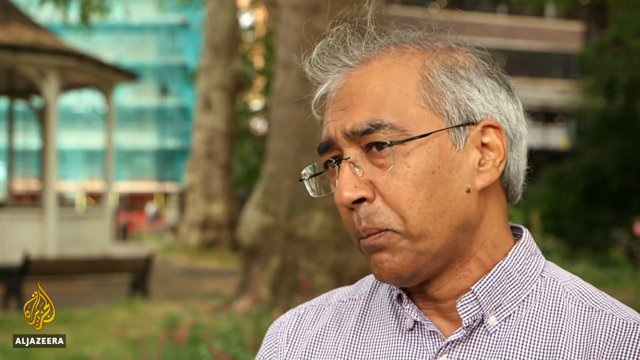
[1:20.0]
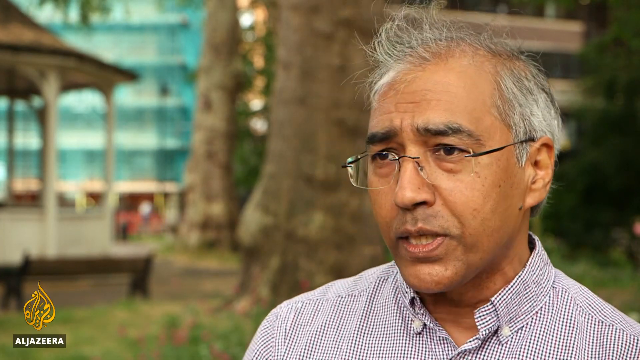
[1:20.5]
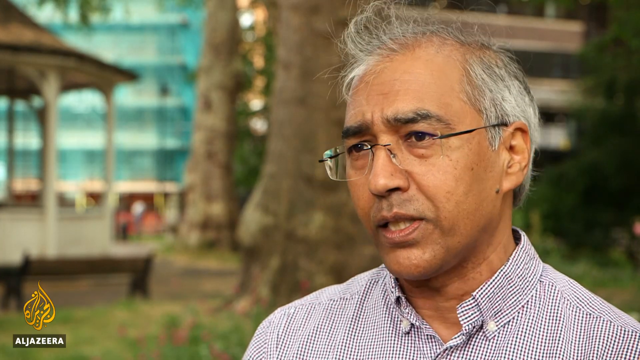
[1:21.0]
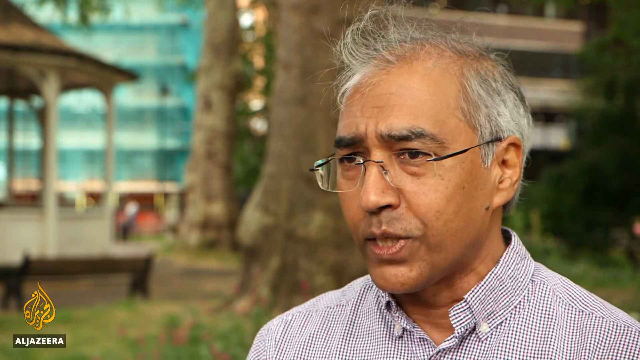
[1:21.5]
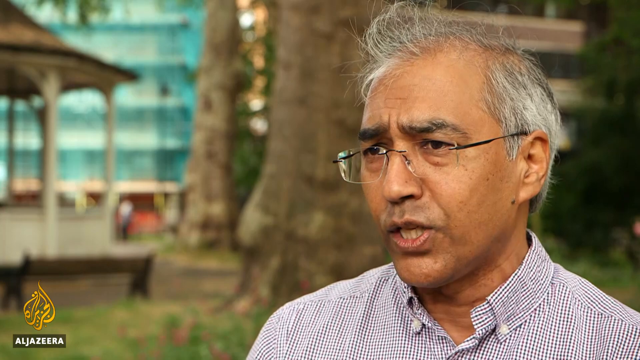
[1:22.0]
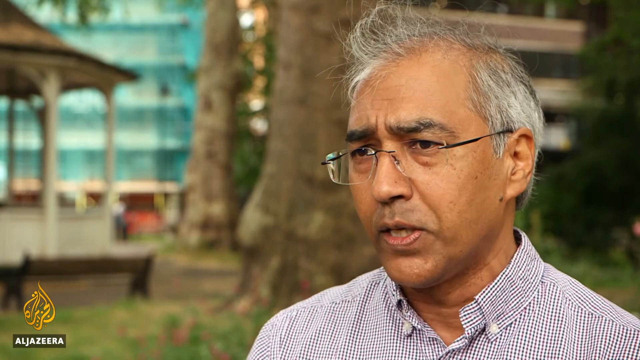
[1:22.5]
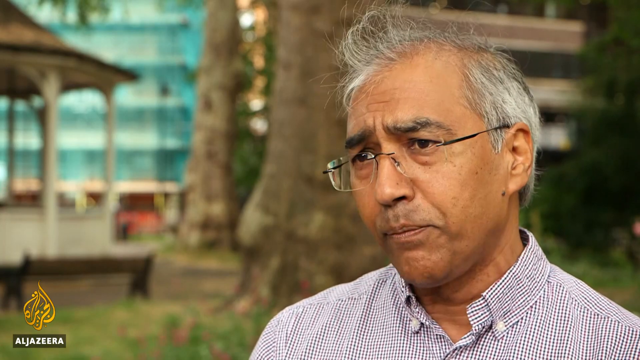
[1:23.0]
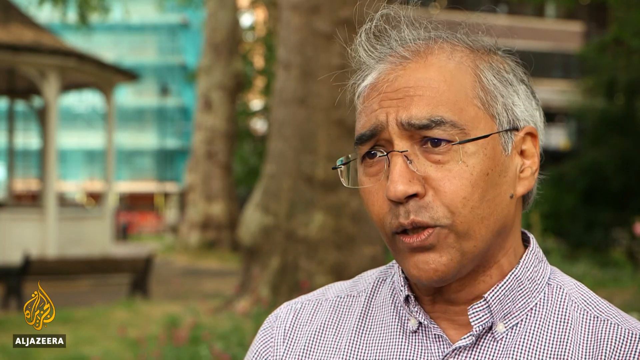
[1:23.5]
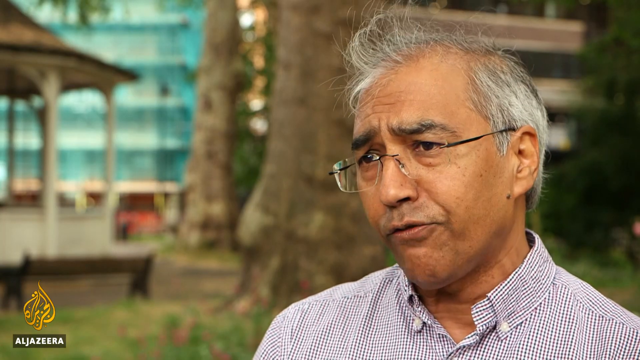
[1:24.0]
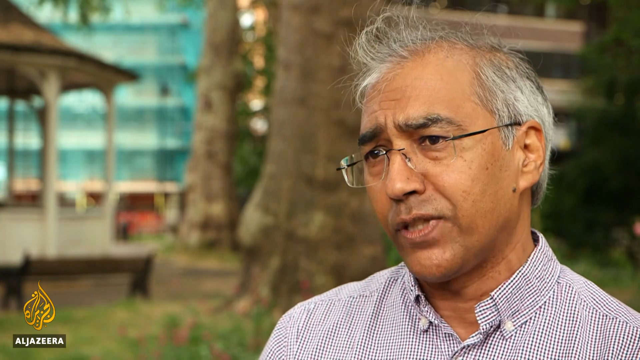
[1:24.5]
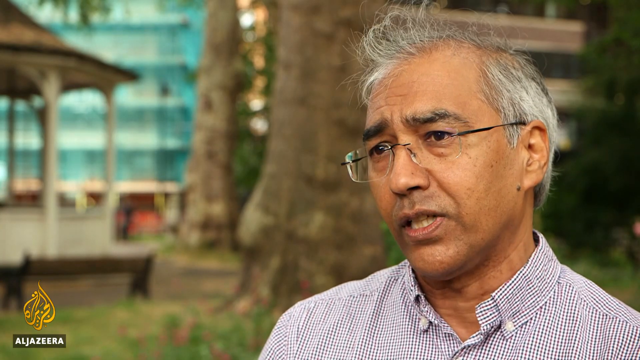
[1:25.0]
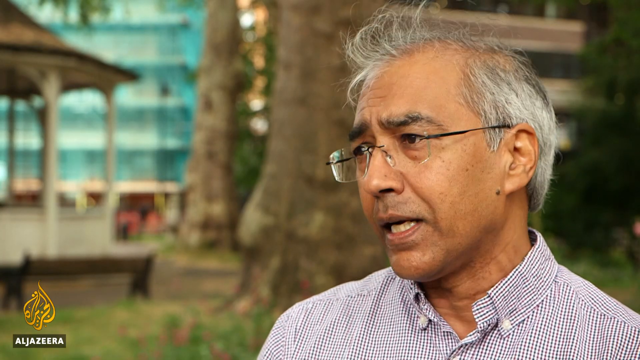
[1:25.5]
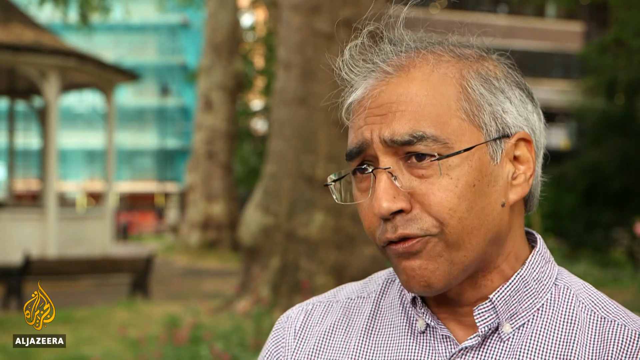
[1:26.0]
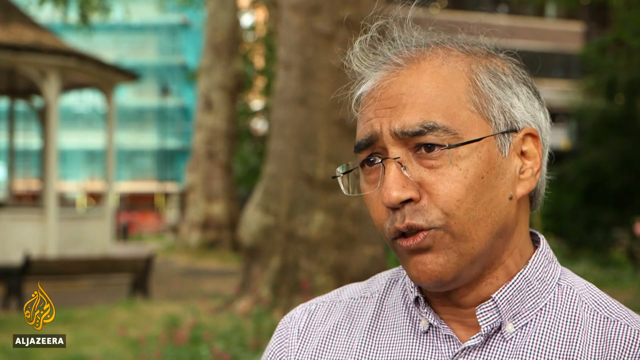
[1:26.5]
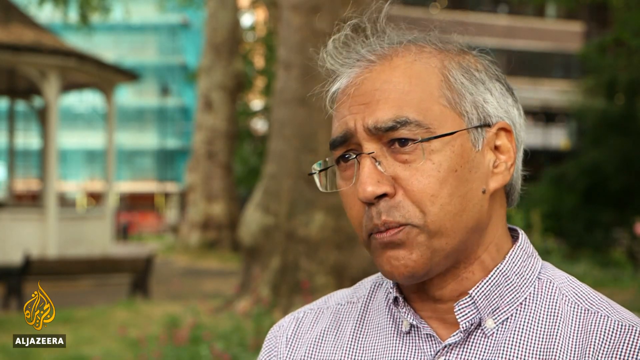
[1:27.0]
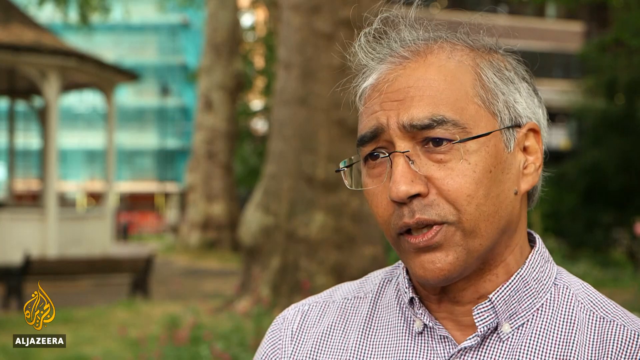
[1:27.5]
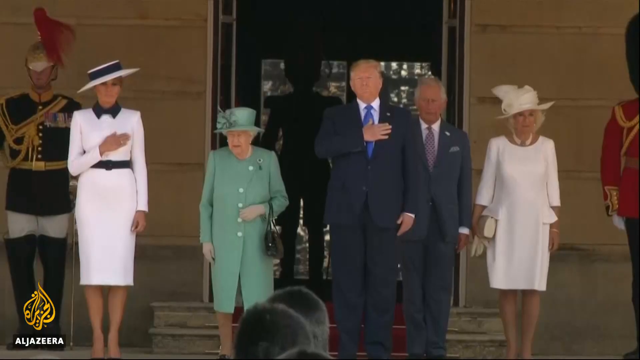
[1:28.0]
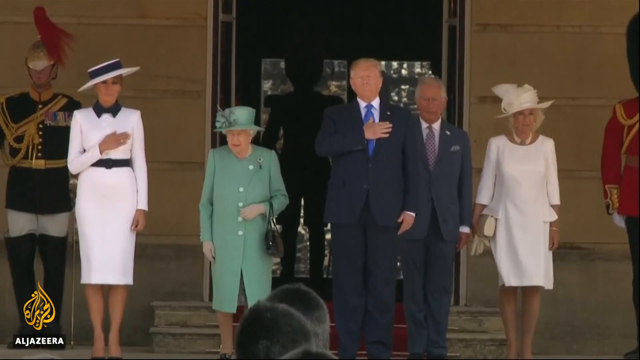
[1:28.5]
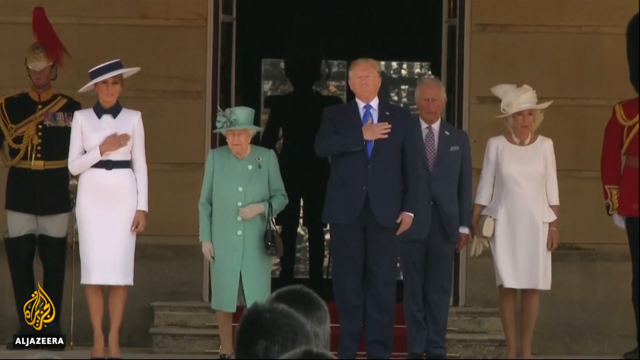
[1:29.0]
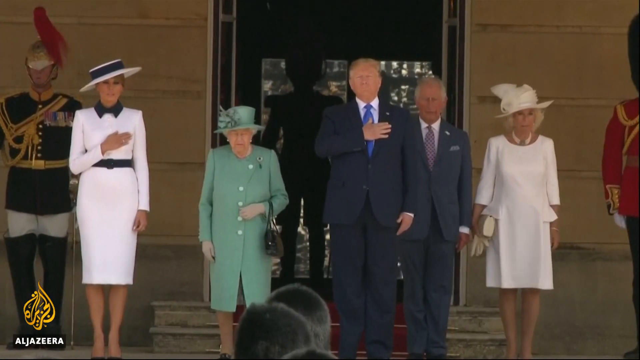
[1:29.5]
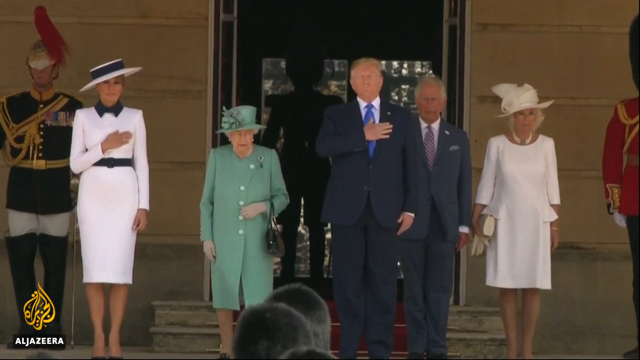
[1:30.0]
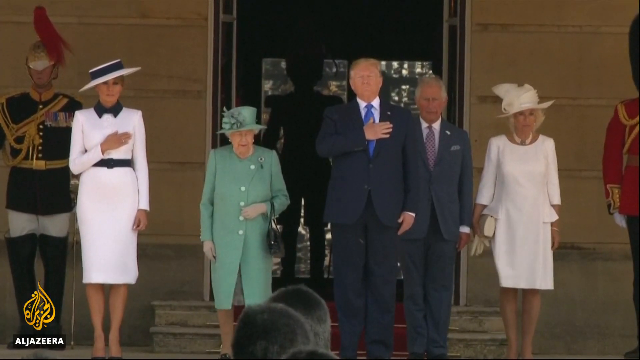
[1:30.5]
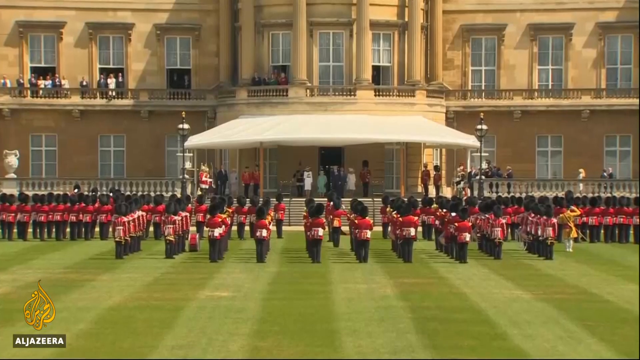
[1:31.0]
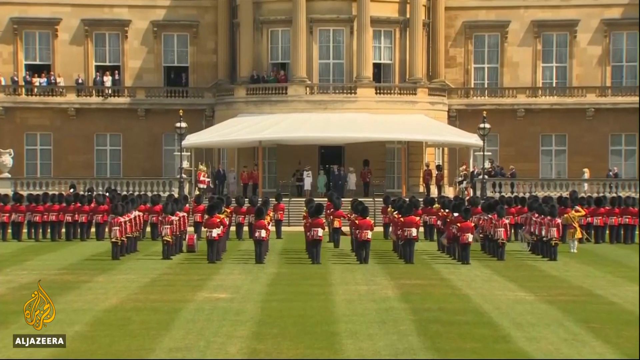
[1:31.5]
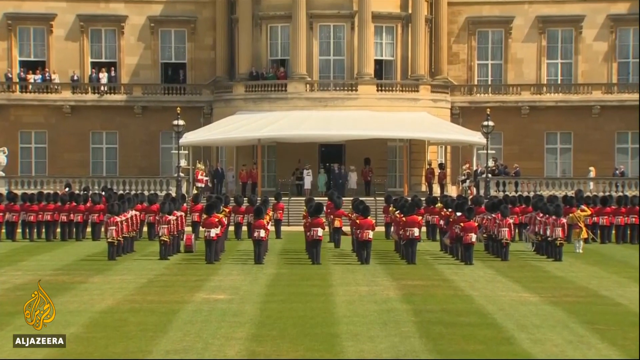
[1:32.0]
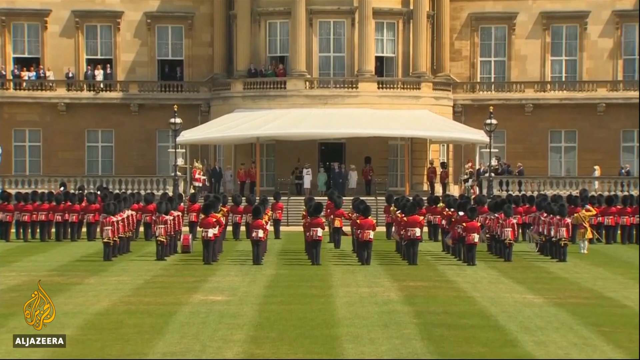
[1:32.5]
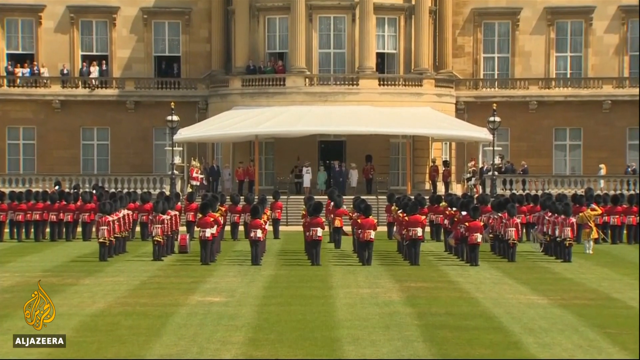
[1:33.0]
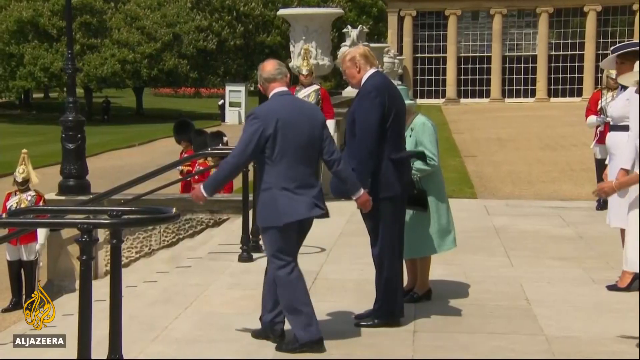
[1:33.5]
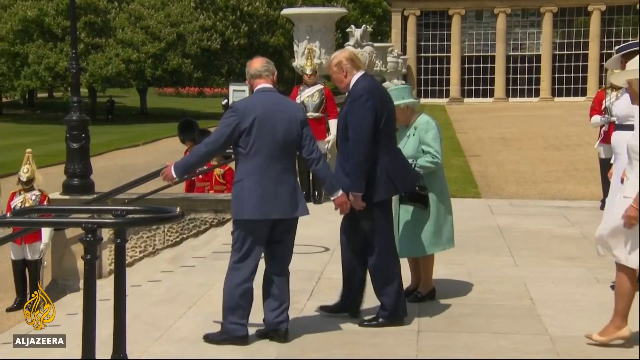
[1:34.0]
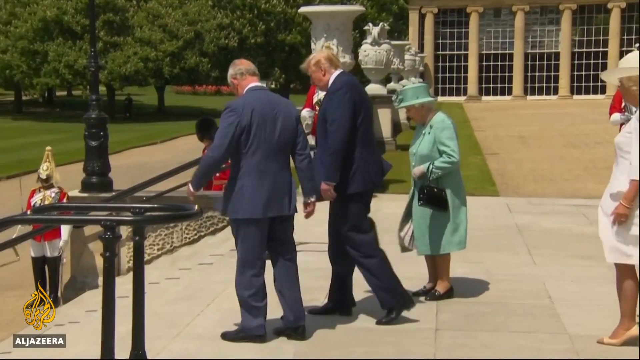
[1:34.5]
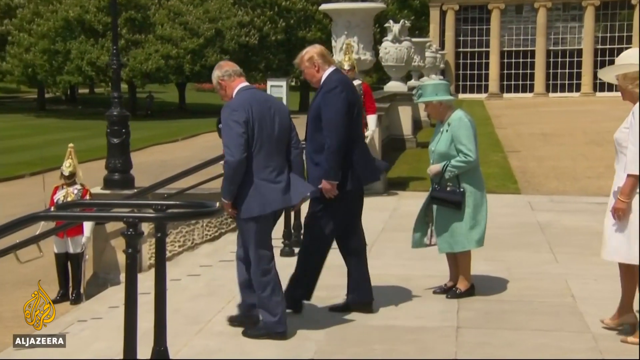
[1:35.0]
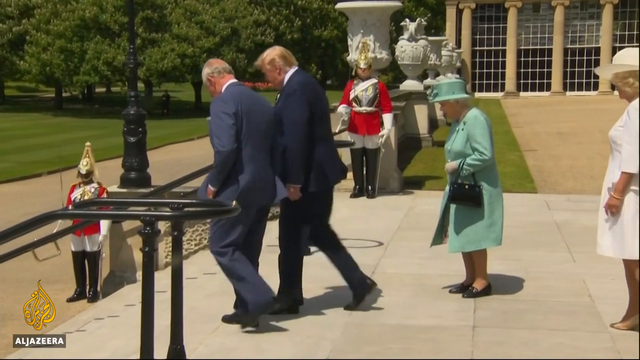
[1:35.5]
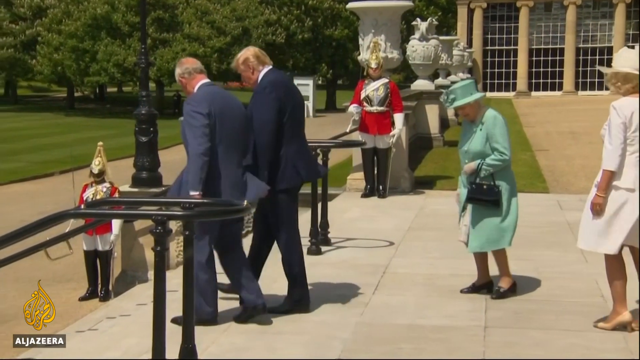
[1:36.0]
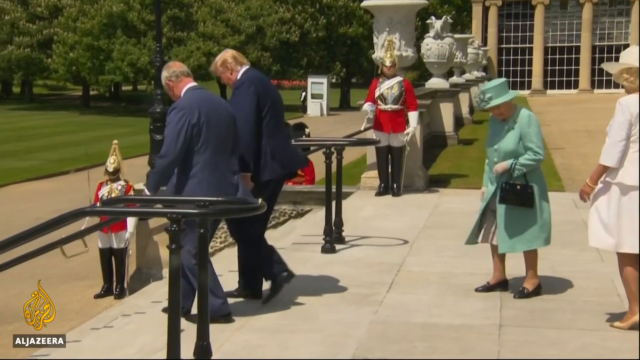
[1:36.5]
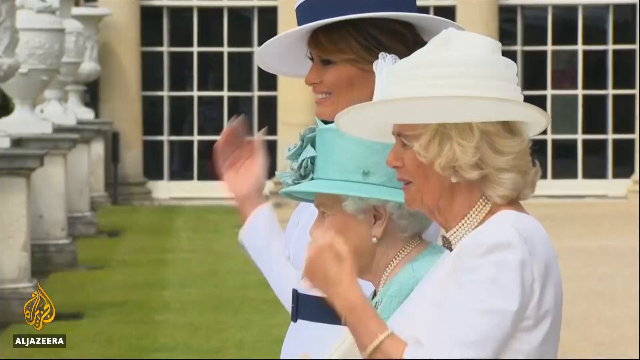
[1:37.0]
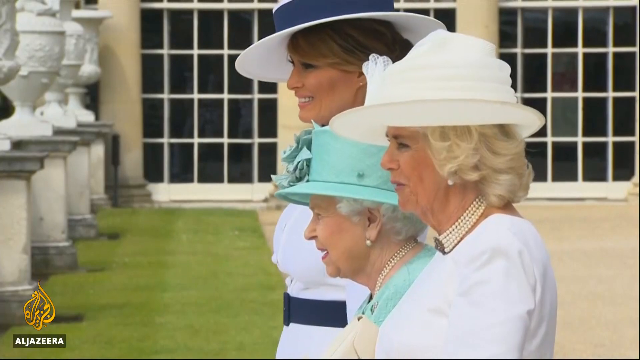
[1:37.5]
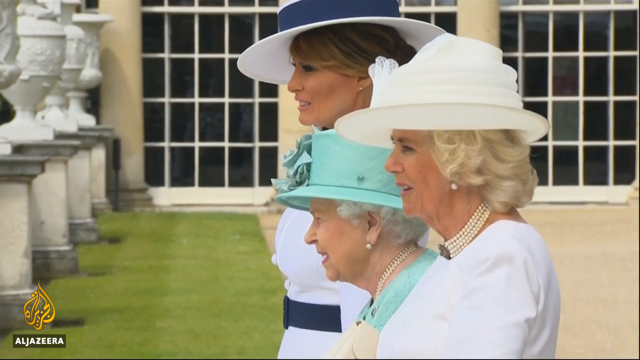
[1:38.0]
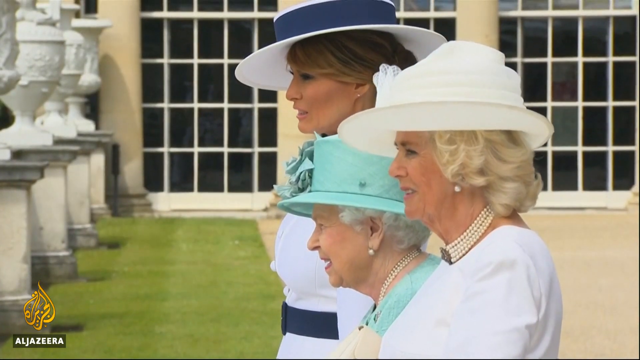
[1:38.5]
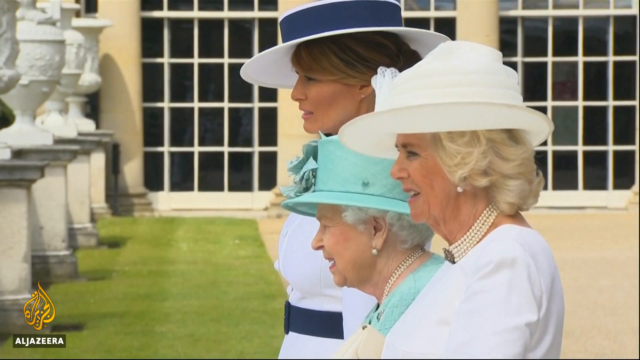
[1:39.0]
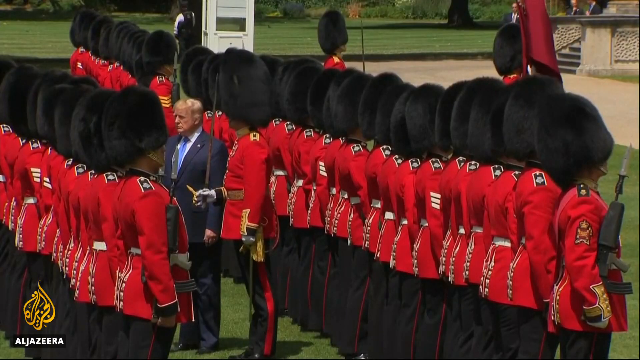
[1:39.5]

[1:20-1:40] A man, apparently Indian, stands sort of on the right side of the screen, his shoulders visible and angled slightly toward the left. The background is blurry but shows a building and some tree trunks. He talks really fast, looks serious, nods his head left and right and sort of sways left and right, kind of like a boxer. Then Trump stands facing the camera with his right hand over his heart. Beside him is Queen Elizabeth, her right arm down at her side and her left hand up in front of her stomach, with a purse hanging from her left hand. Further toward the left side of the screen is a woman in white with her right hand over her chest, and on the other side of the screen are another woman in white and another man standing. Some heads are visible in the background. Next, British soldiers with furry hats and red coats are seen from the back, standing in front of the building where Trump and the others are standing. Then Trump and the other man walk toward the left side of the screen. Upstairs, Queen Elizabeth and the two women in white stand in a line facing the left side of the screen: Melania in the back, Elizabeth in the middle, and the other woman. More soldiers are shown with Trump standing between them. The Indian man is shown talking again, and then Trump is shown saluting again.